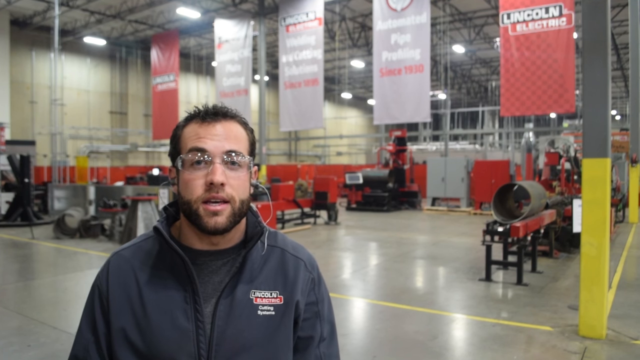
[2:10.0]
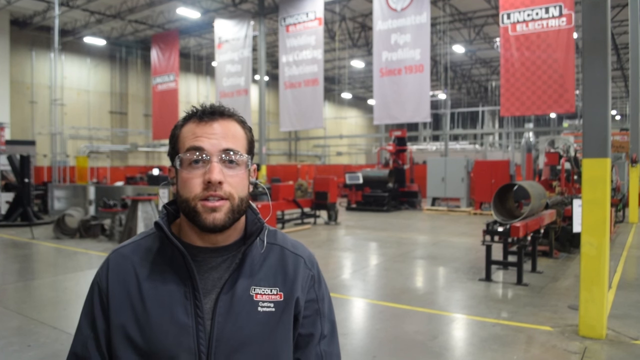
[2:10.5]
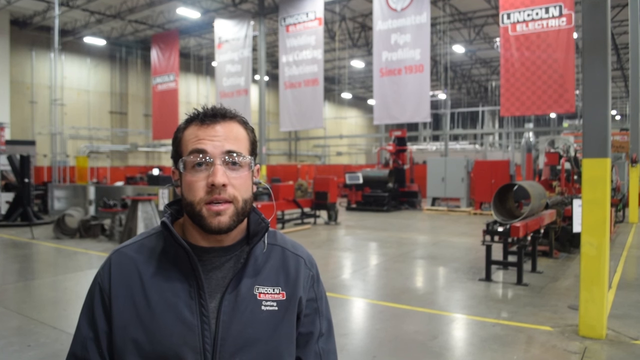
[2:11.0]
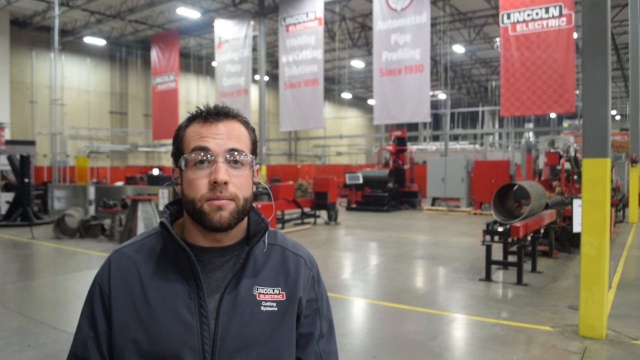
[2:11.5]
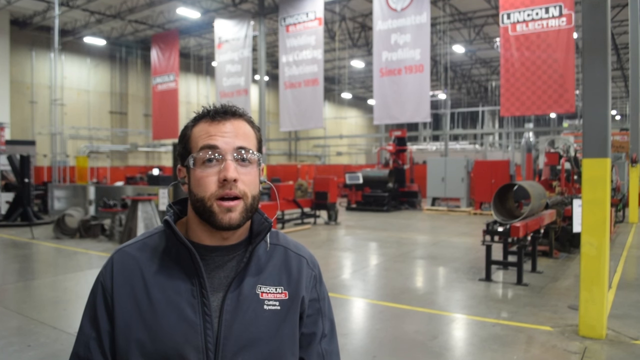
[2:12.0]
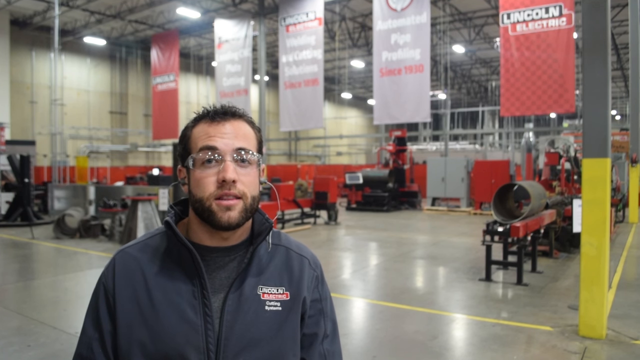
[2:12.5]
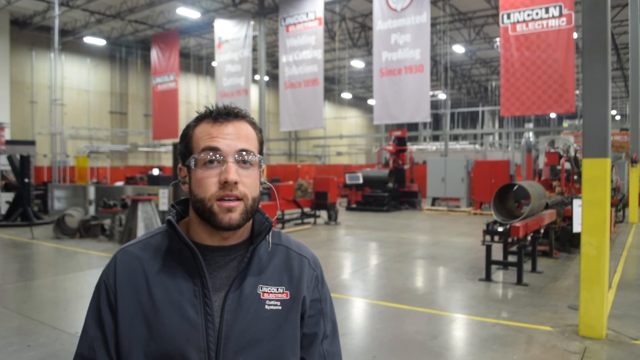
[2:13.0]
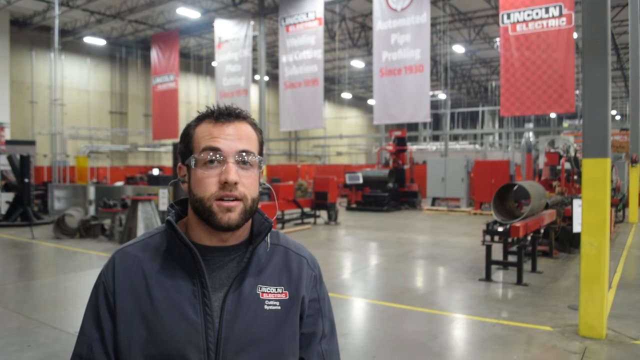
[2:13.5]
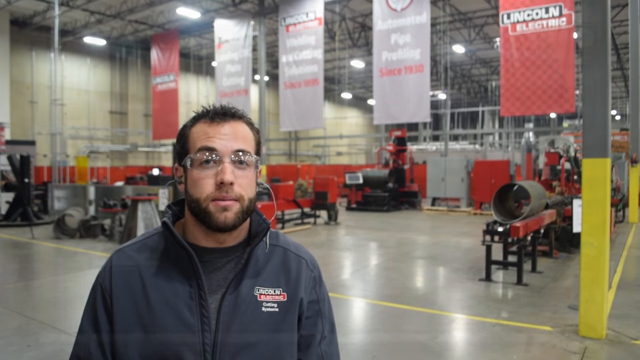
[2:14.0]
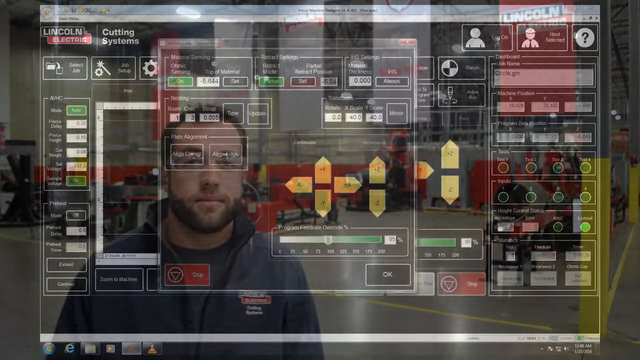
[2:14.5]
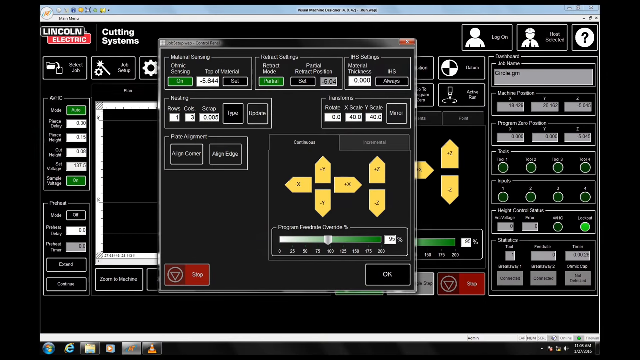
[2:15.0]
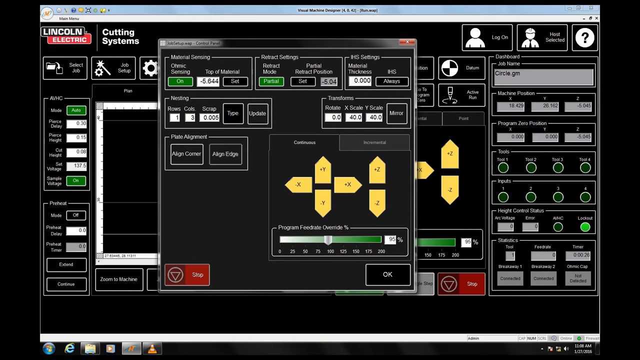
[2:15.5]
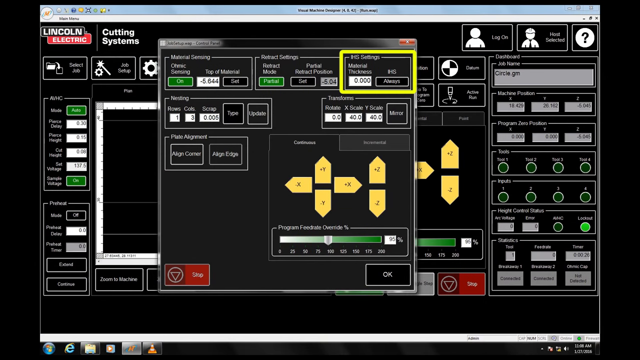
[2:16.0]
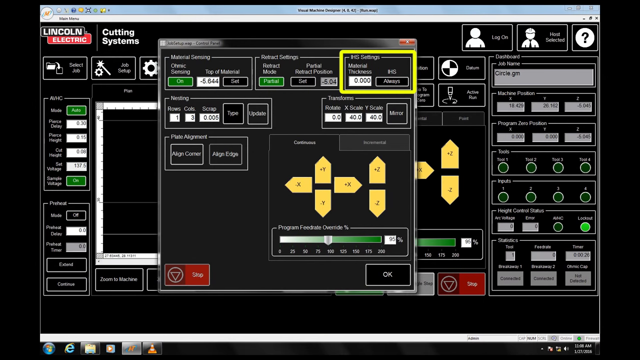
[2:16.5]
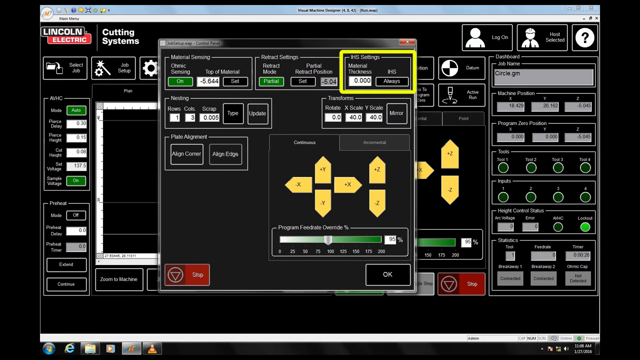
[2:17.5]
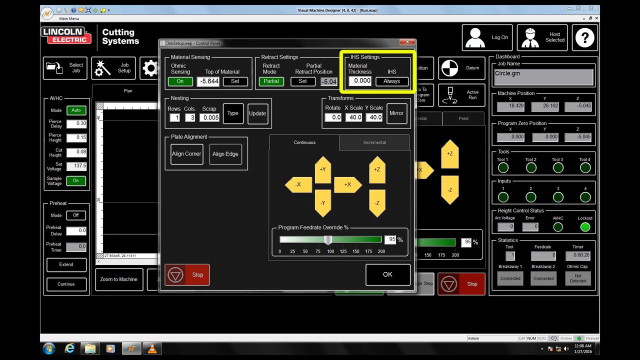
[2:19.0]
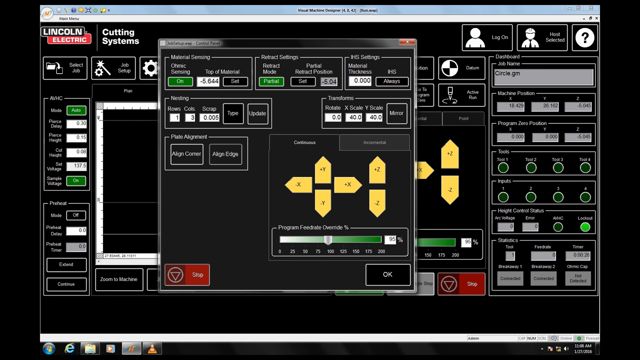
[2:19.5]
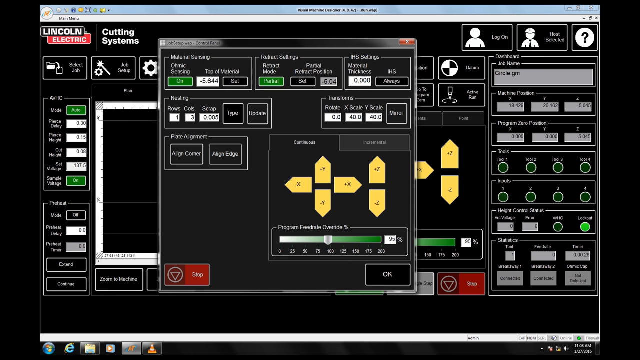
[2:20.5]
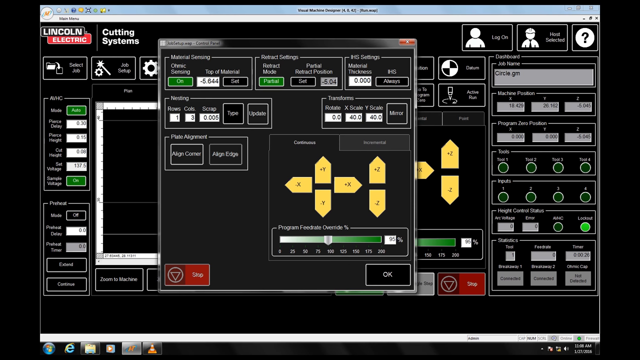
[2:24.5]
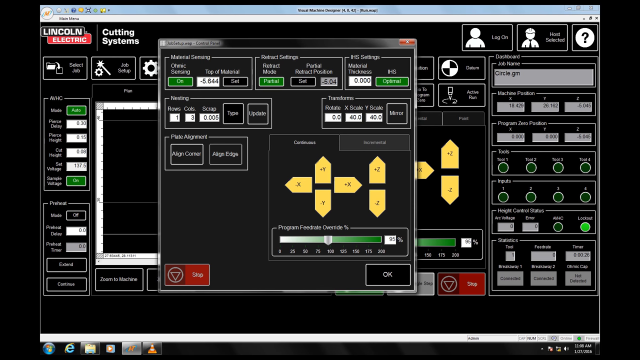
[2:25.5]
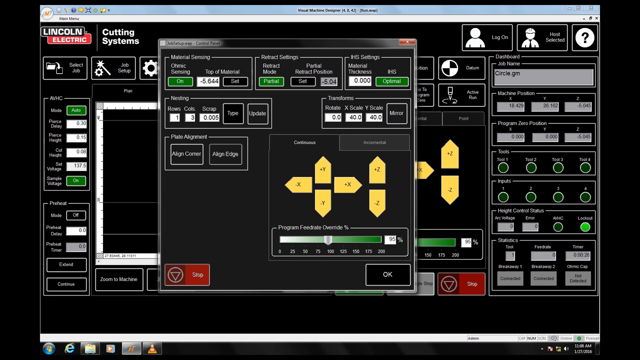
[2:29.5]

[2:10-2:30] Mark Humphries is talking. The screen shows the IHS setting on yellow, and "Optima" is showing green lights. He wears a sweatshirt and transparent glasses, is bearded, and puts on a T-shirt before putting on the sweatshirt, which has the "Lincoln Electric" logo. He wears AirPods. Behind him are different machines and banners, with machines in red, gray and black, and one machine with gray, red and black on its leg. The banners show "automated pipe profiling" and "since 1930". While he is still talking, the view moves to the screen, where the settings show "always" in green, and the IHS setting shows "material" with numbers below it that are not clearly visible.